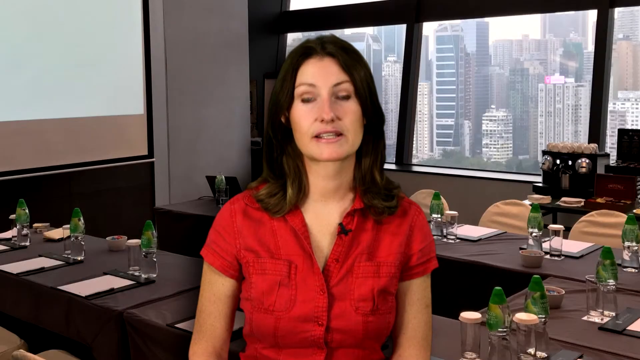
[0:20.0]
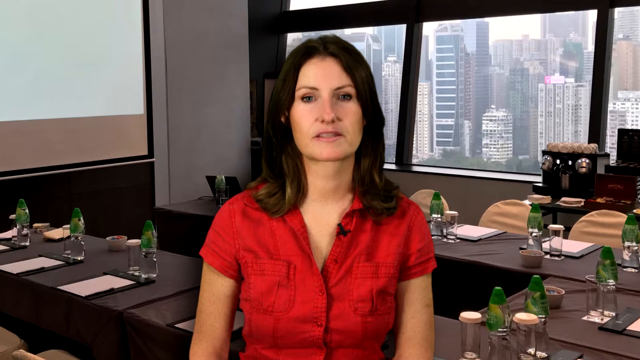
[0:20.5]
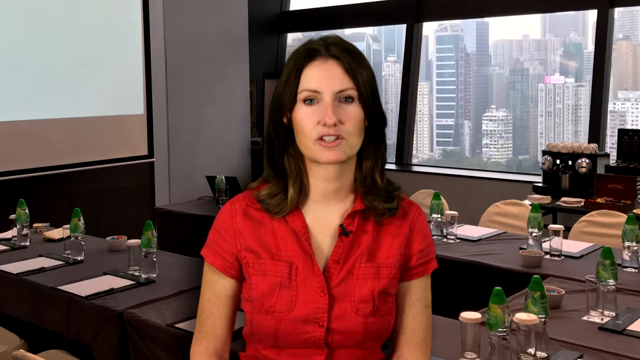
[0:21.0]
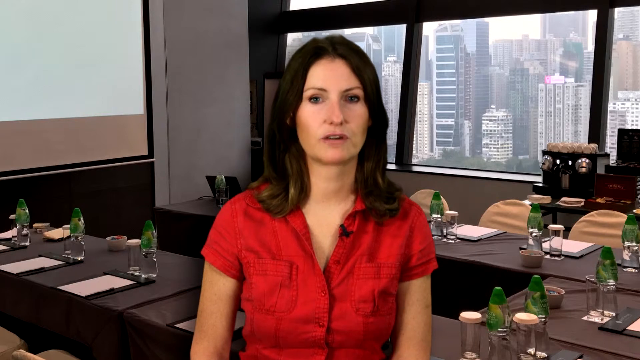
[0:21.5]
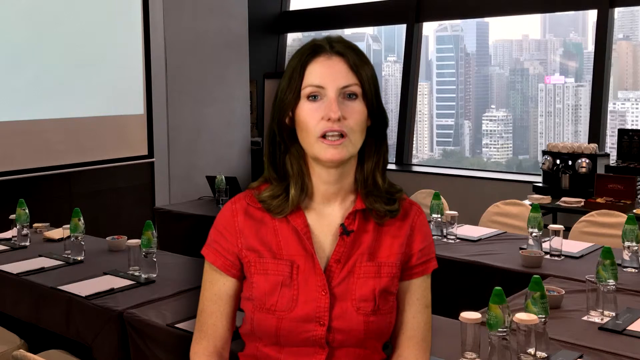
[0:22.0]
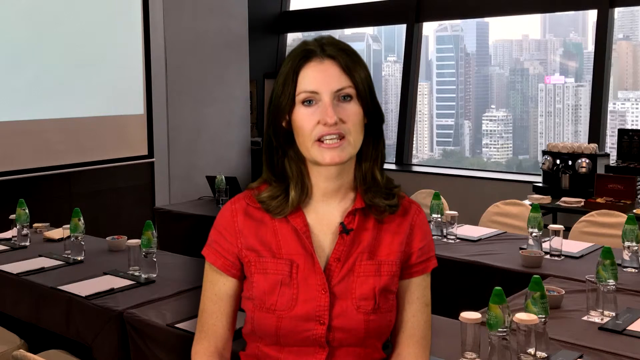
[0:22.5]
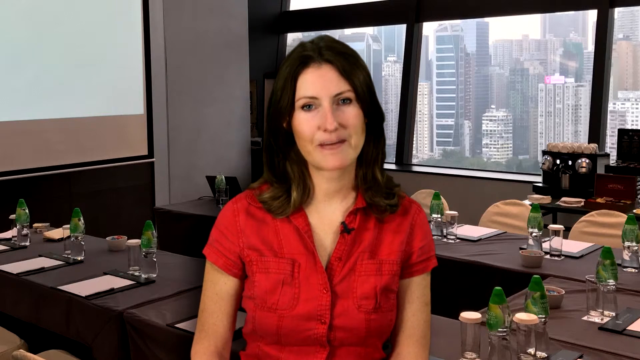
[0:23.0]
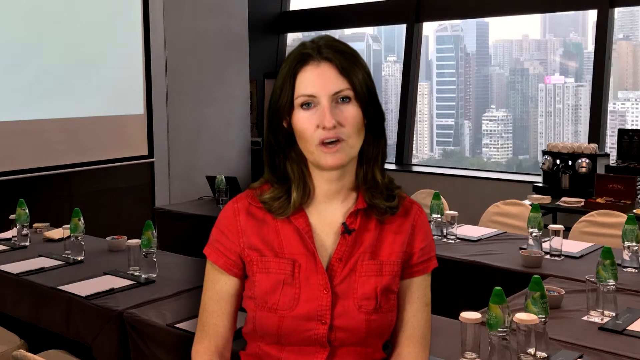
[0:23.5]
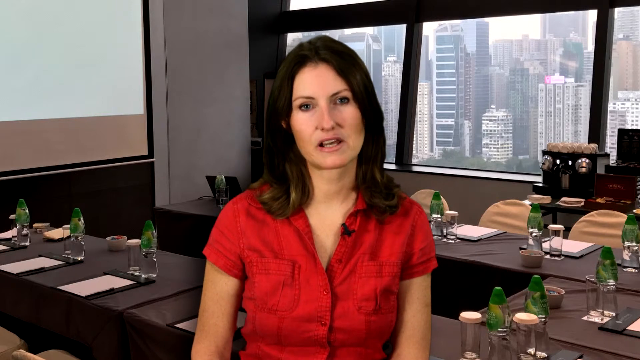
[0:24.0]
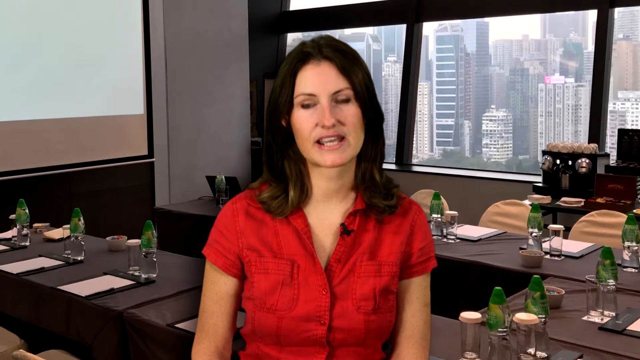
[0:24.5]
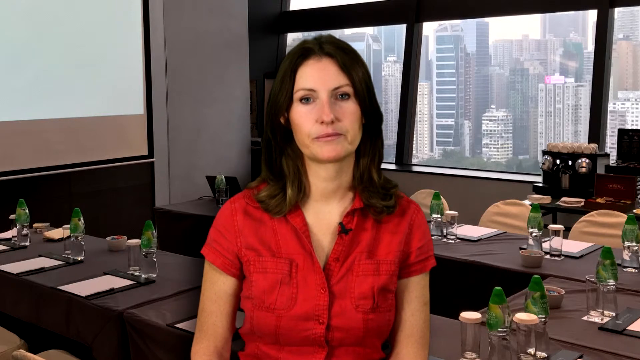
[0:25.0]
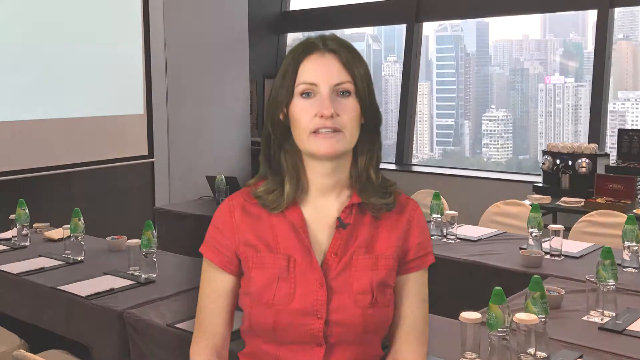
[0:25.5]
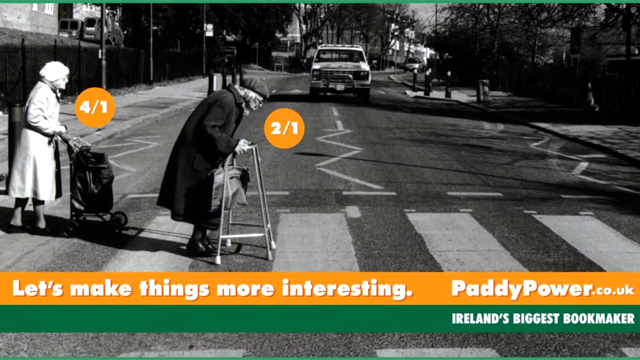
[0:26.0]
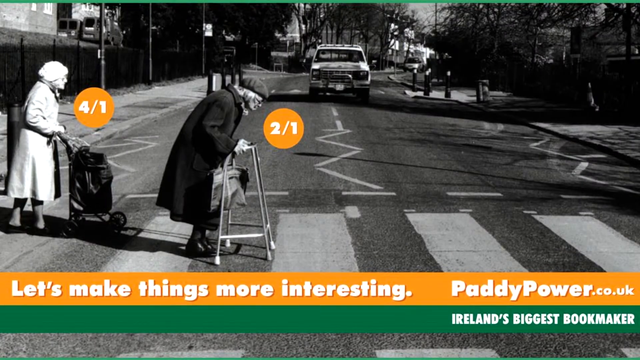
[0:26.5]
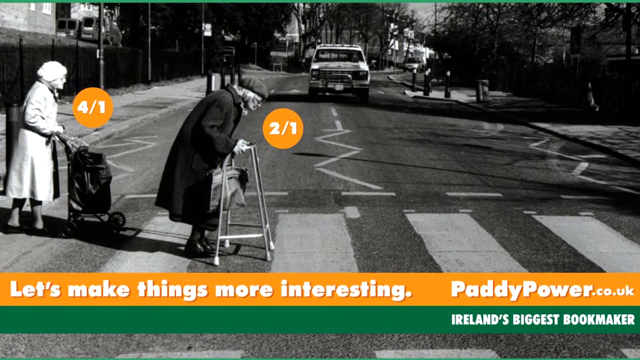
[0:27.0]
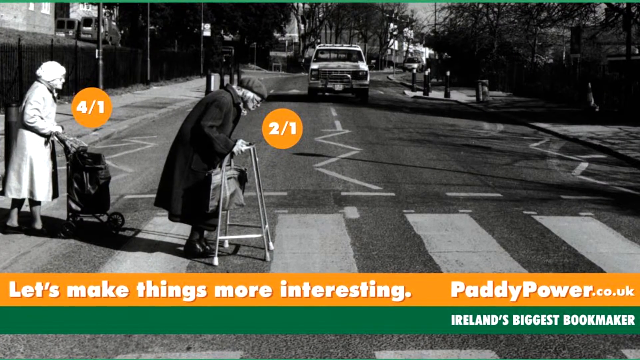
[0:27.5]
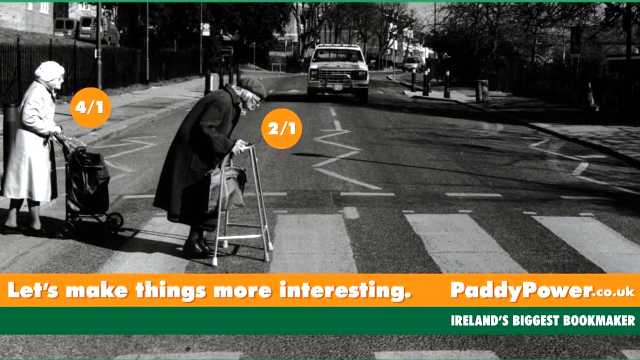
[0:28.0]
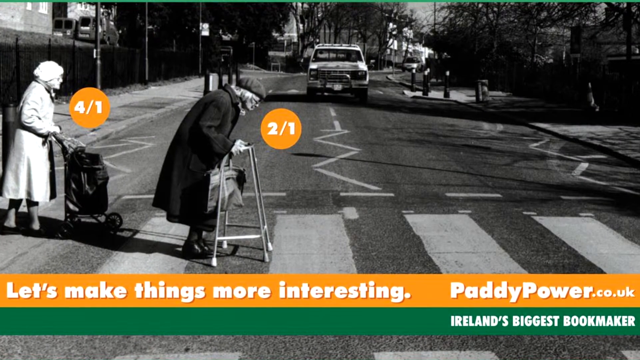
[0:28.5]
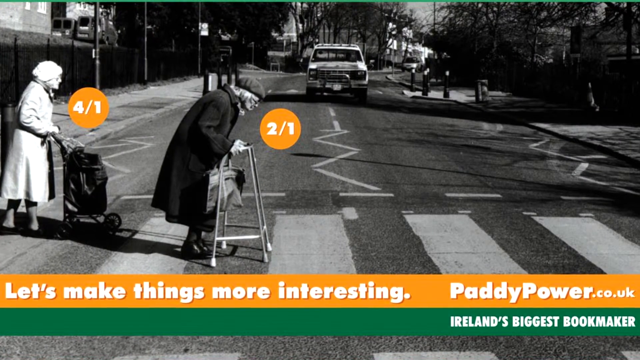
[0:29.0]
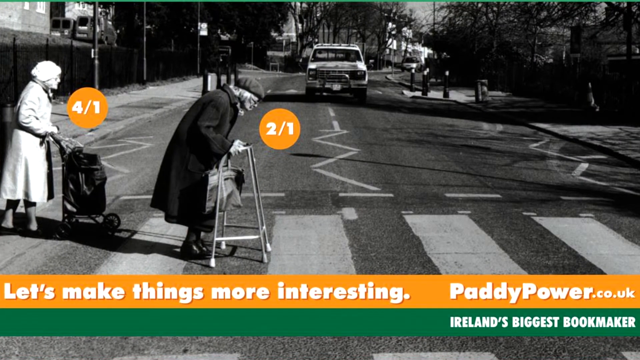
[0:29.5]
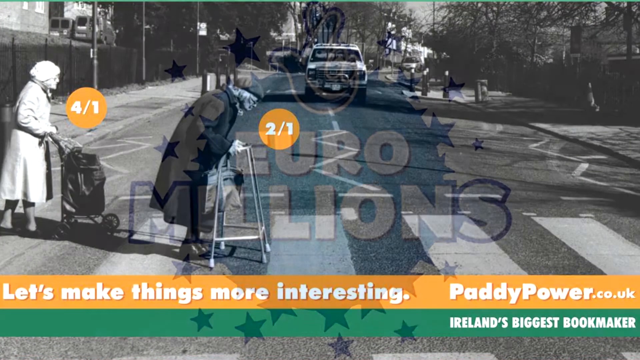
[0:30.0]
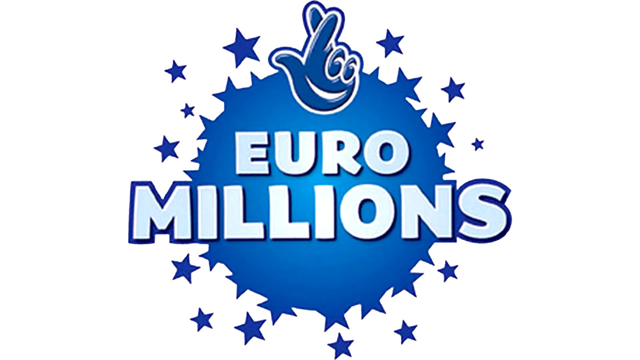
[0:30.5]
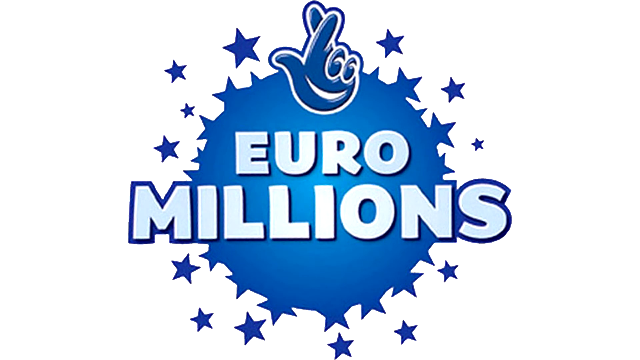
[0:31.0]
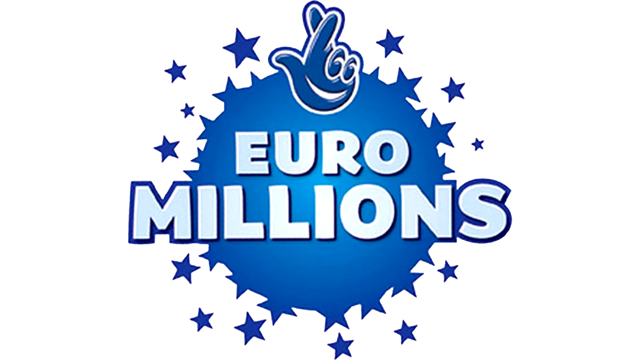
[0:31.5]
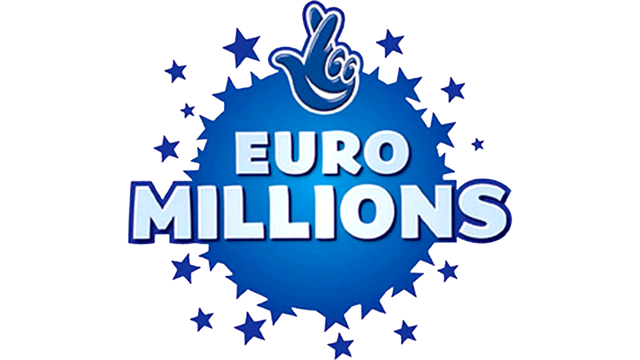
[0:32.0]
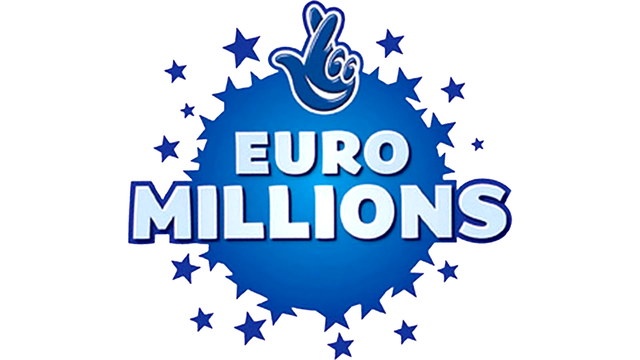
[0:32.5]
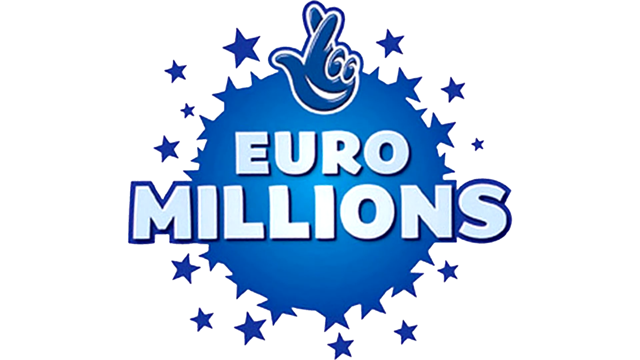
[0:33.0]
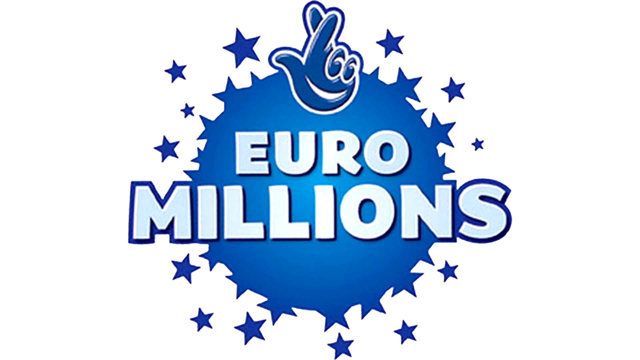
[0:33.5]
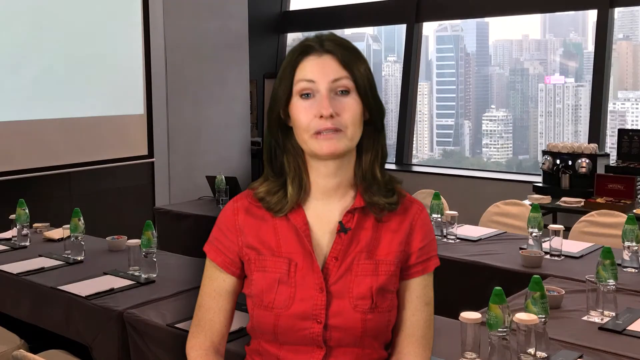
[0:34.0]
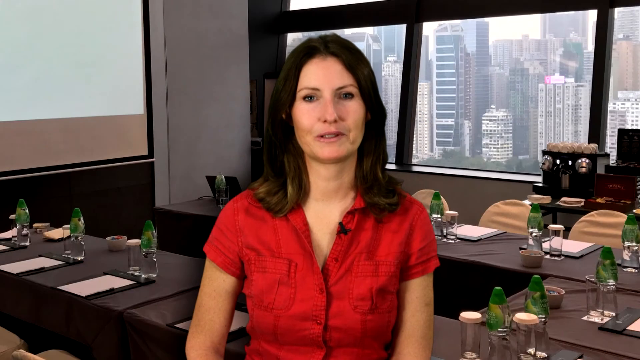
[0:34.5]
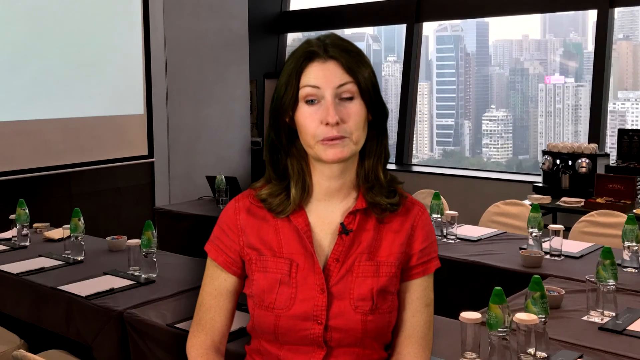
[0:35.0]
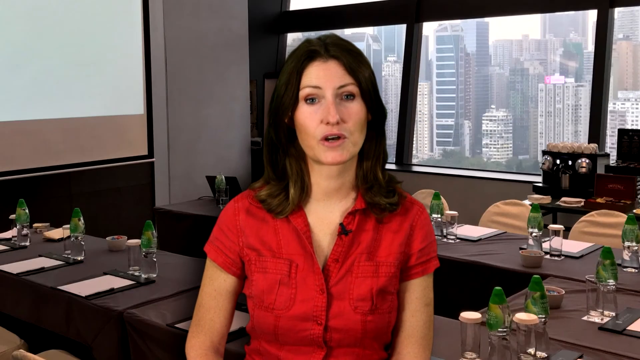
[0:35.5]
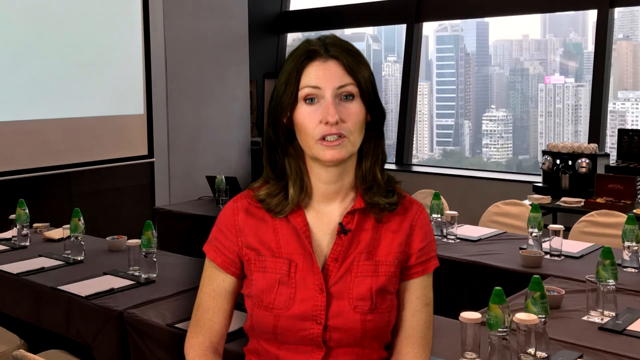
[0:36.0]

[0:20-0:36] The woman in the red shirt with brown hair, broadly around 35, continues to be shown with the city in the background in something like a dining setting. The screen then transitions to two elderly people, a woman and a man, crossing a crosswalk as a truck approaches. Fractions are displayed: four out of one in white on a circular orange background, and two out of one on another circular orange background, along with text including "paddypower.co.uk" and "Ireland's biggest book maker." A EuroMillions logo is then displayed on a white background, followed by a transition. In a last transition, the video returns to the woman in the red shirt with brown hair, with the cityscape background changing the setting, and then the video ends.